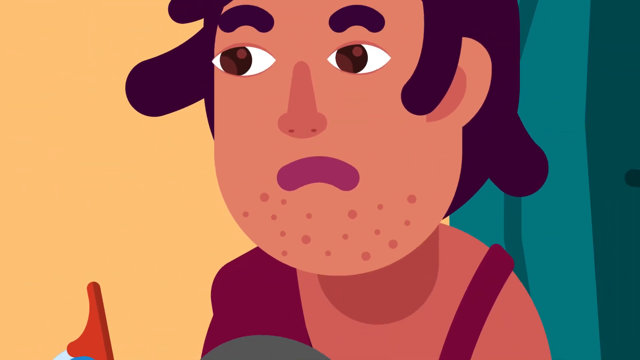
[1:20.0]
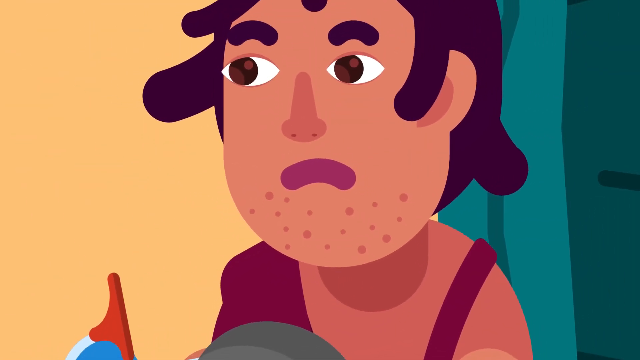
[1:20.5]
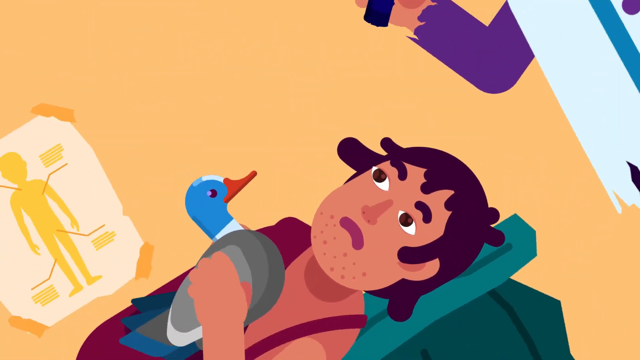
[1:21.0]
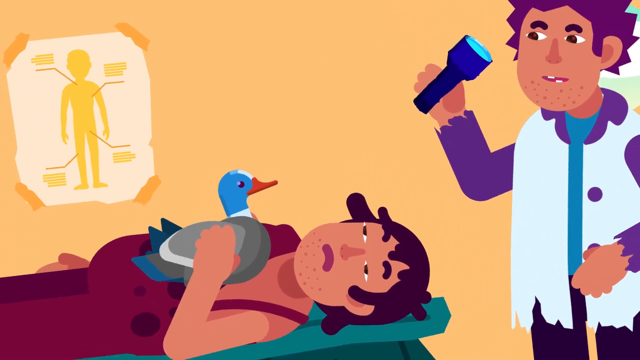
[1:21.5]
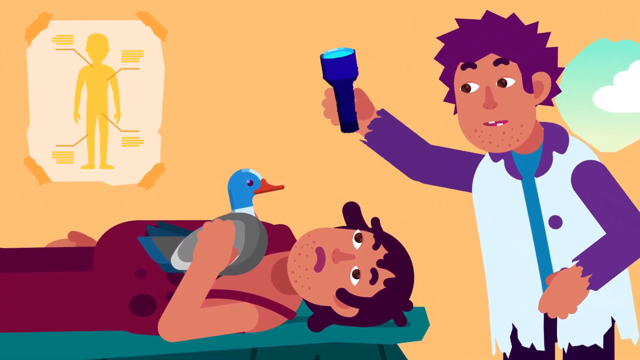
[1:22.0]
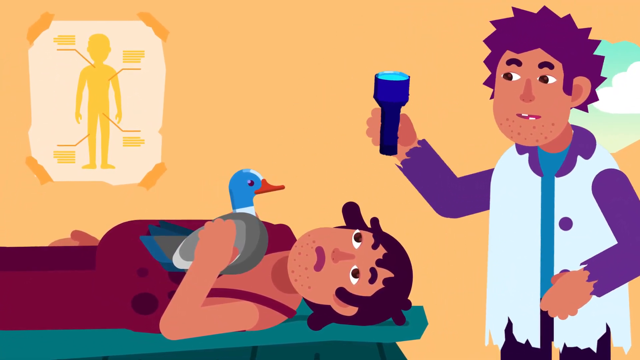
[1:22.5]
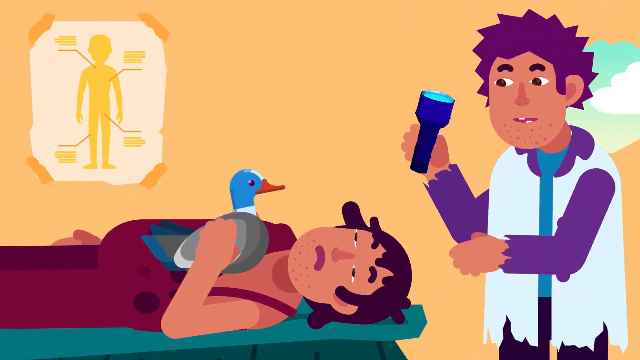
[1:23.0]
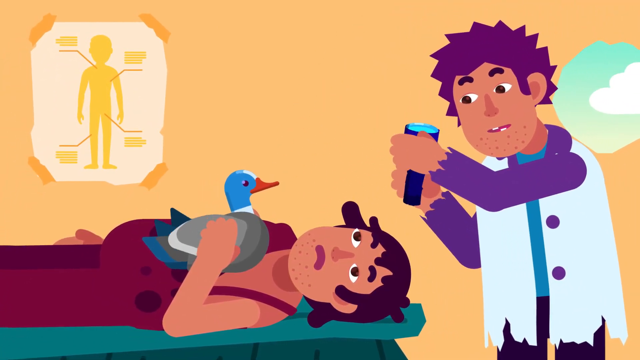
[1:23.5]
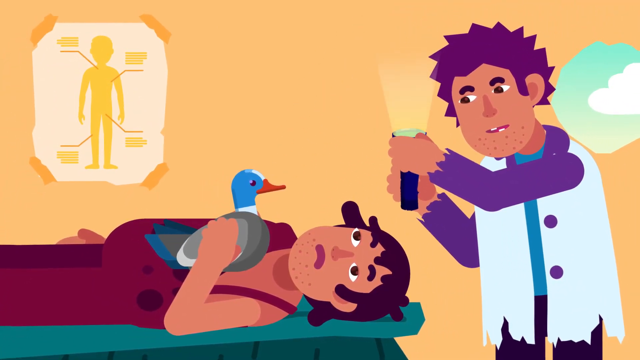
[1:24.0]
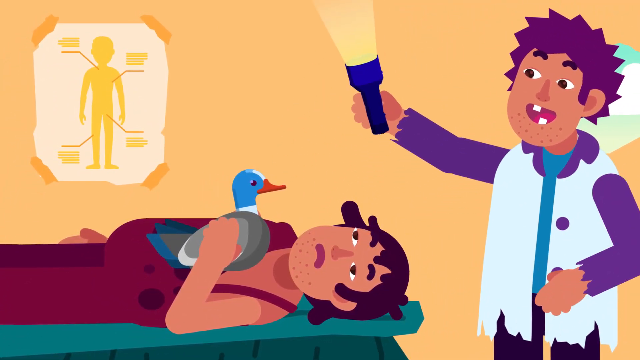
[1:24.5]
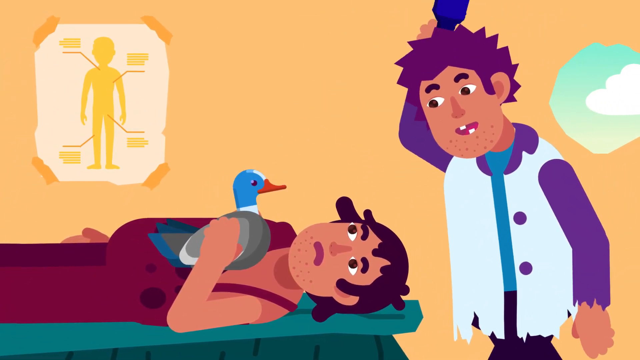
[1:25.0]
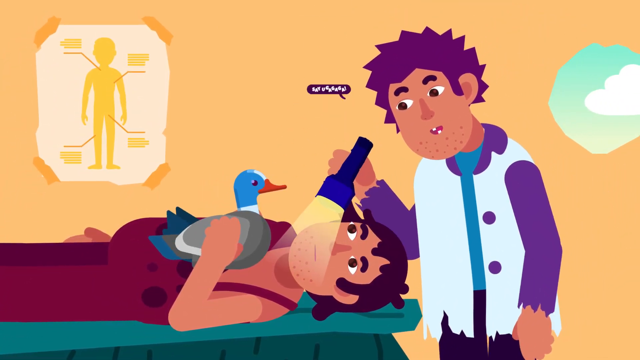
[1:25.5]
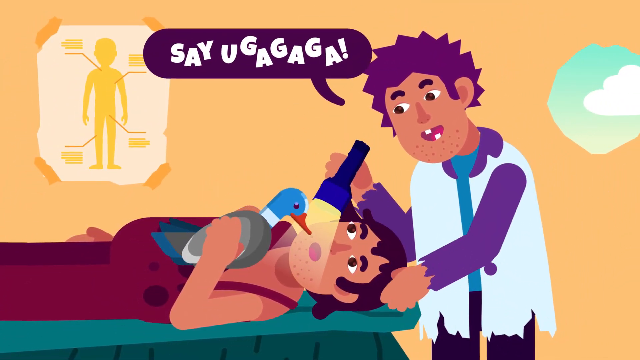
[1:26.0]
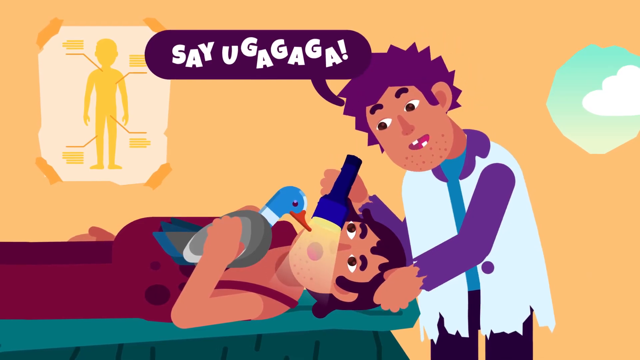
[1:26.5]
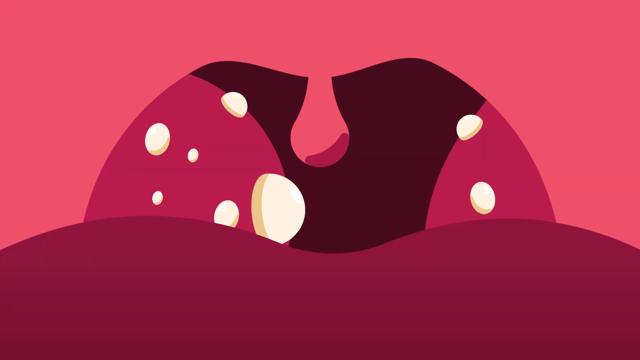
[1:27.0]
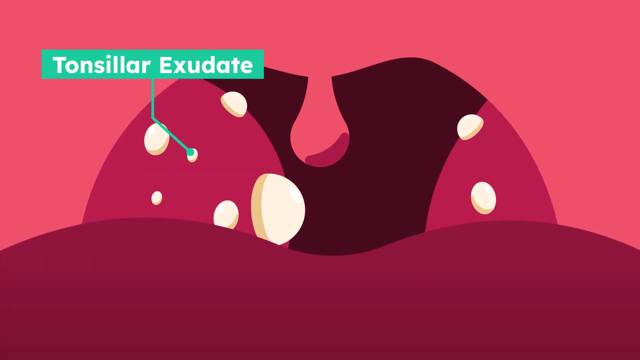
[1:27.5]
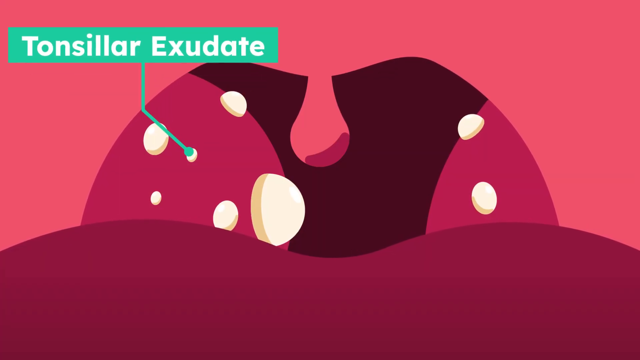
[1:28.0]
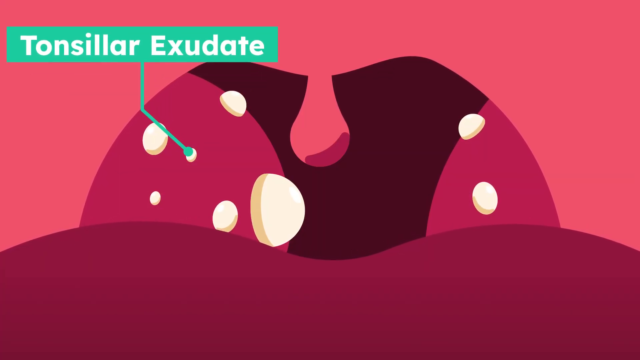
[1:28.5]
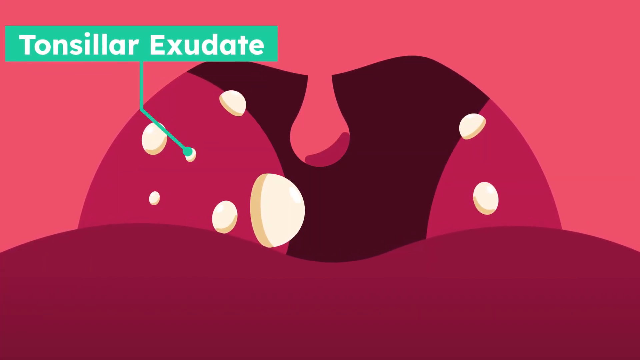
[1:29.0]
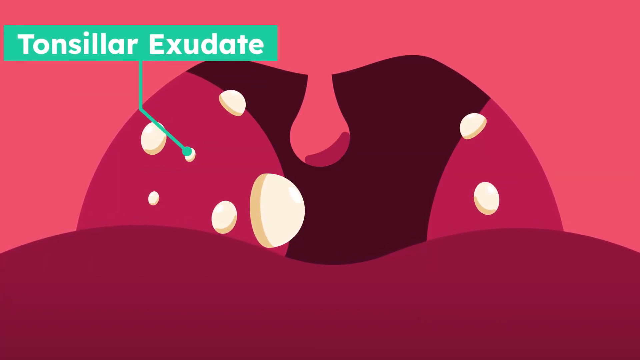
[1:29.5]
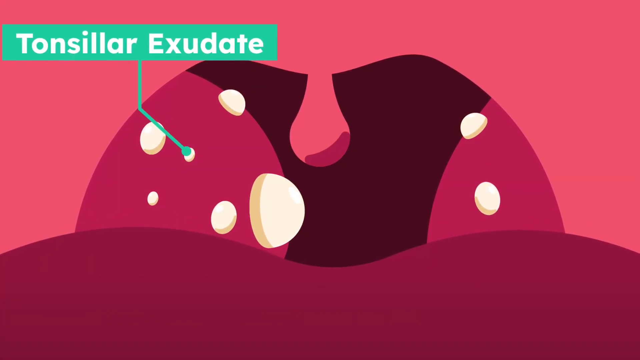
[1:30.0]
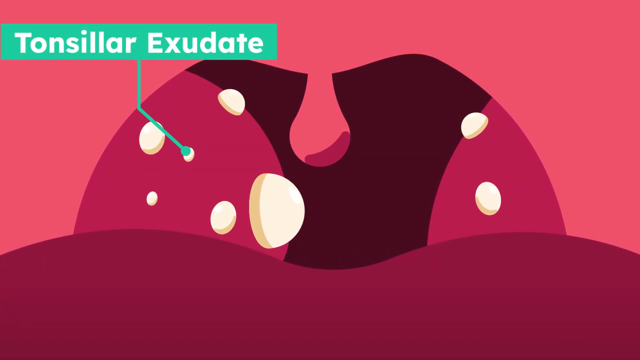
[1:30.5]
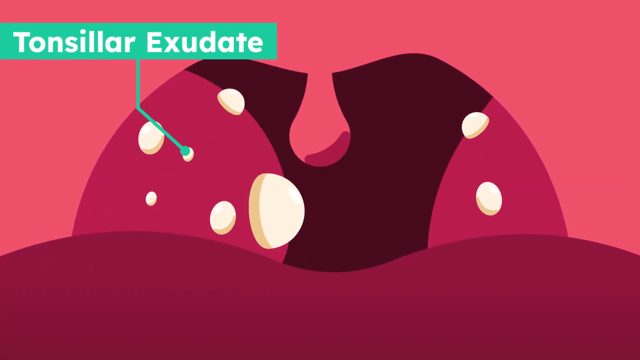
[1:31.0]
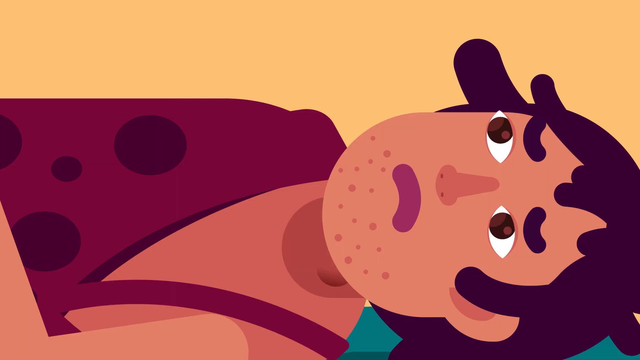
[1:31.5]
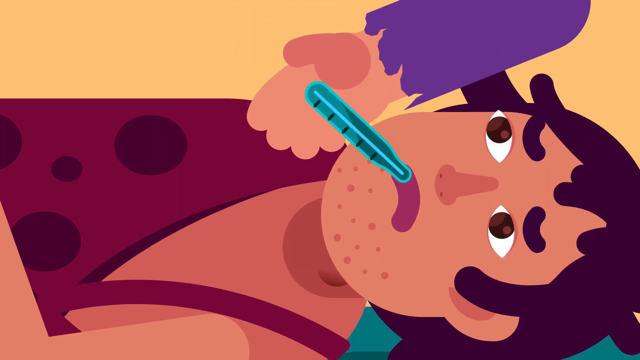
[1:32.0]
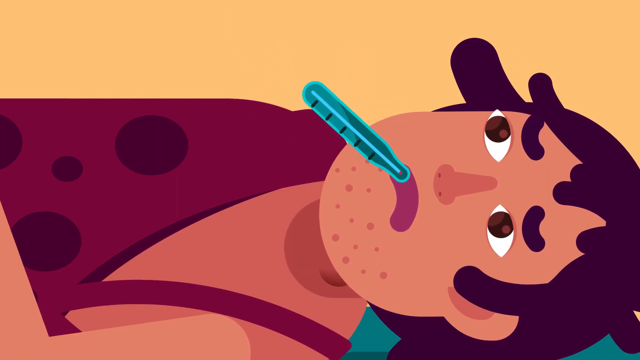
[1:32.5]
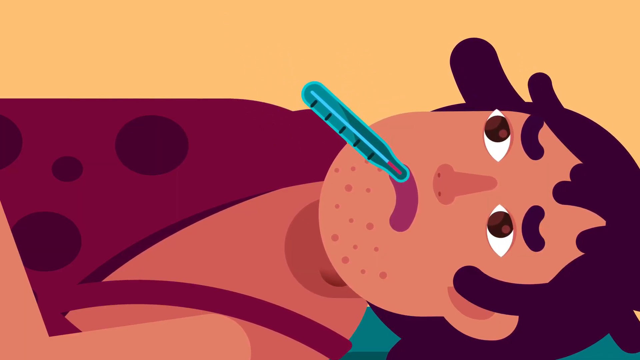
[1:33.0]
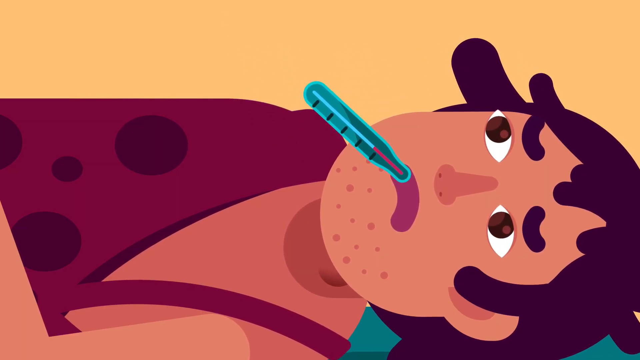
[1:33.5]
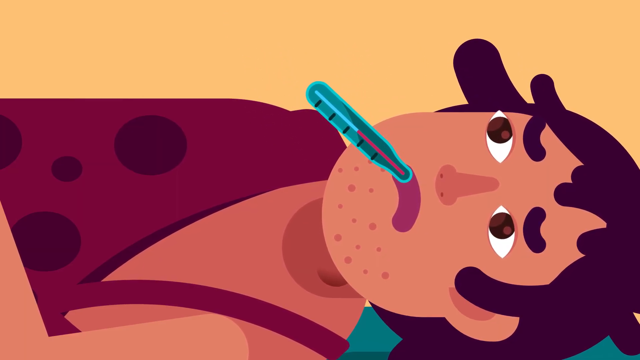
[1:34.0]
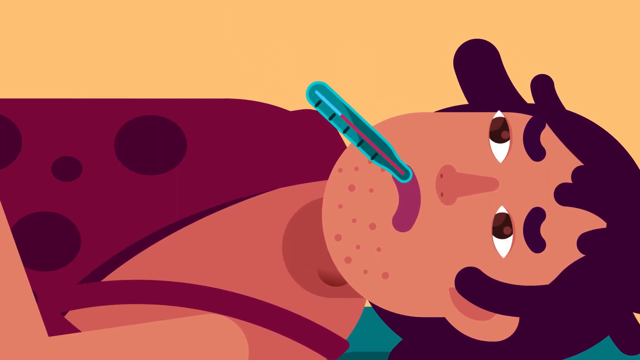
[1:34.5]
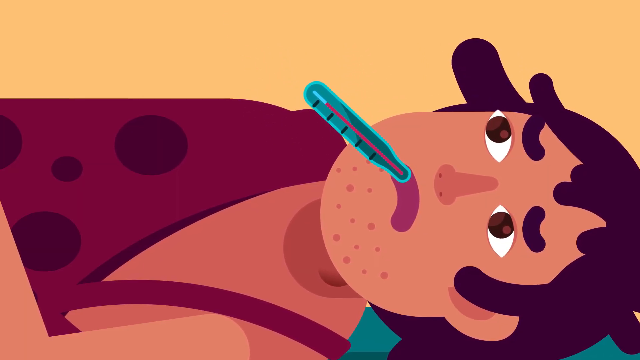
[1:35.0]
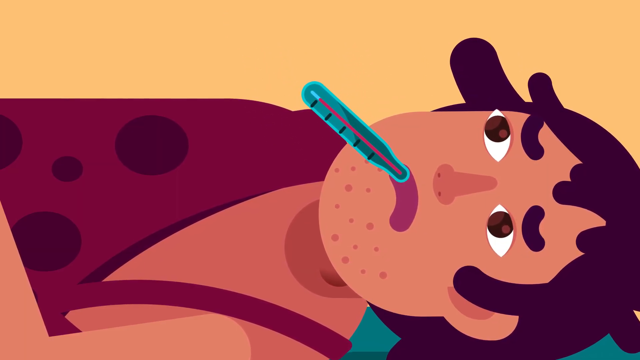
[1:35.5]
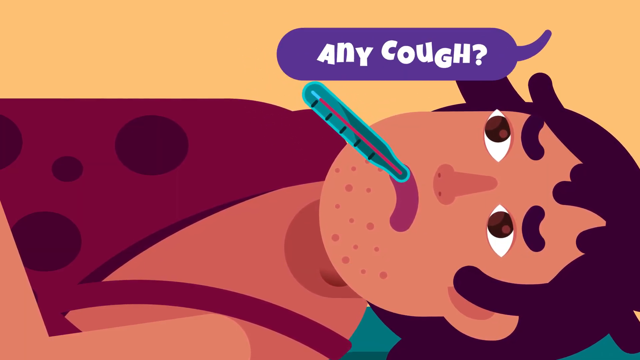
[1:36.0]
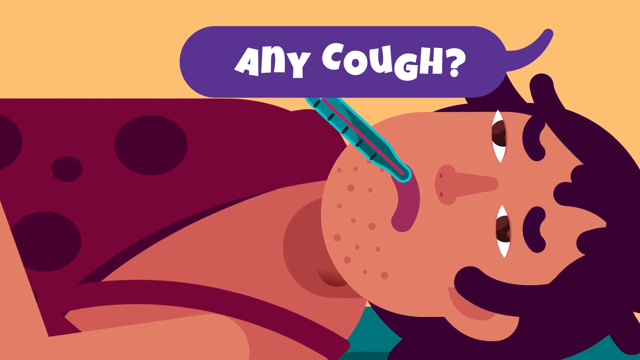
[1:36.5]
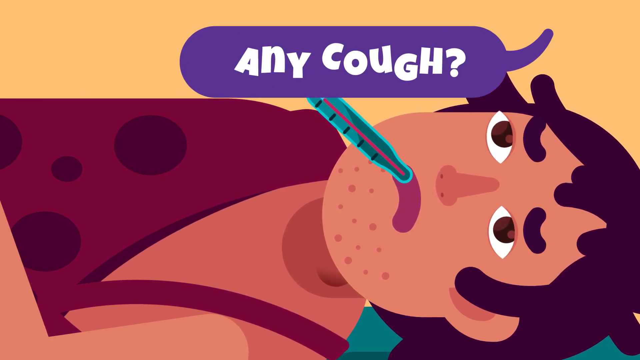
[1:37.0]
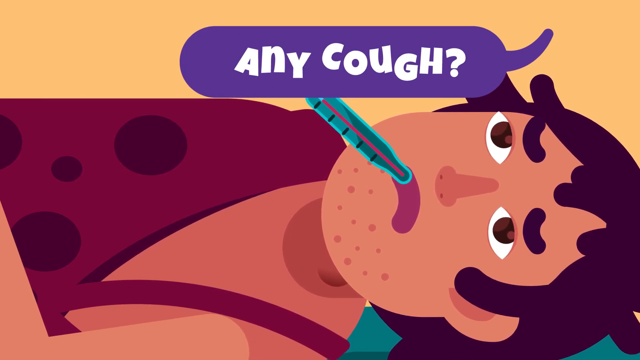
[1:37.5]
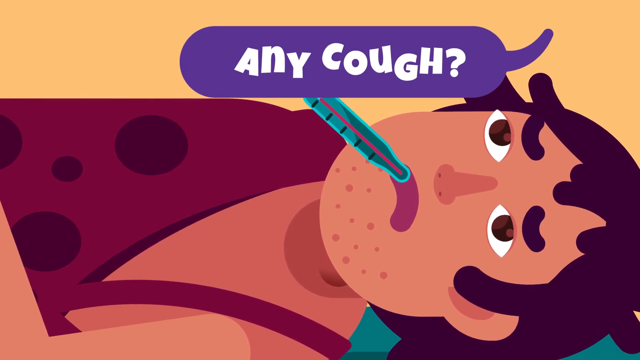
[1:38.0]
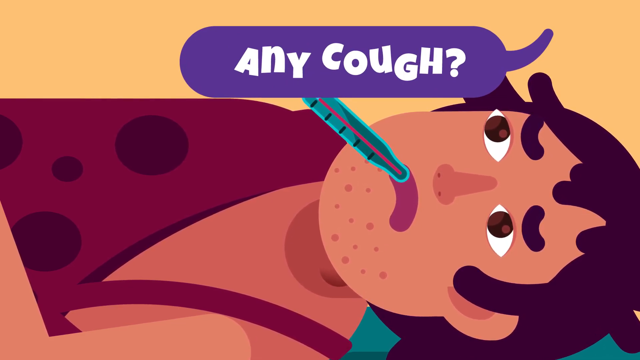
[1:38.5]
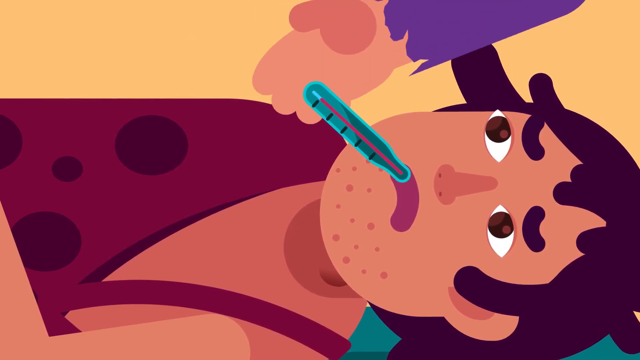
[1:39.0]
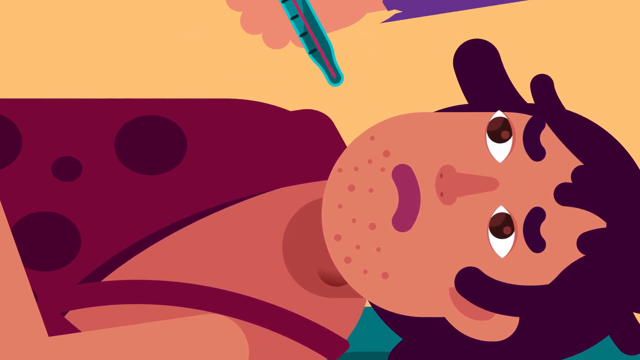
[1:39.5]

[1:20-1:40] The patient holding the duck, experiencing symptoms, lies on an examination bed. The other person, who seems to have caught the symptoms, holds a flashlight and appears to check that it is on before examining the patient's mouth. An animation of the patient's mouth shows white spots on the tonsils. The person then puts a thermometer in the patient's mouth, and it is shown growing, signifying a high temperature. The thermometer is blue with a red bar inside indicating the high temperature, and the person takes it out of the patient's mouth. A speech bubble appears showing the person asking the patient with the duck whether they have any cough, and the patient shakes their head no.